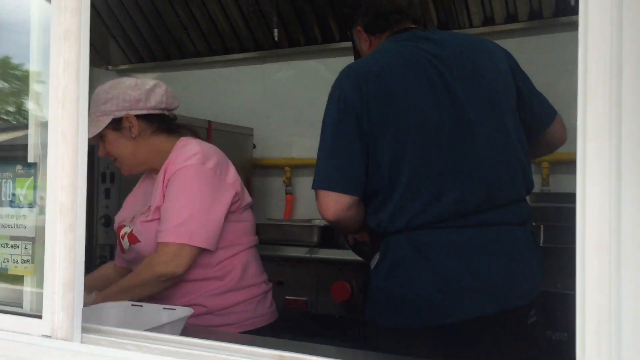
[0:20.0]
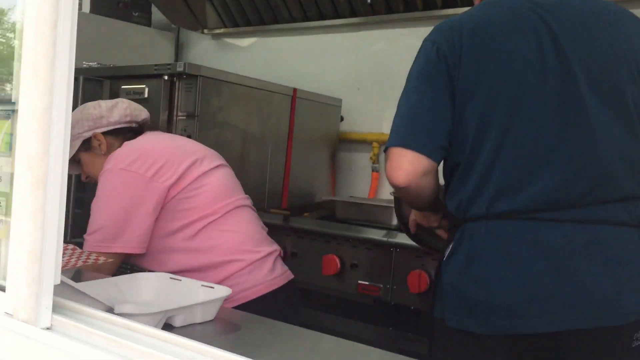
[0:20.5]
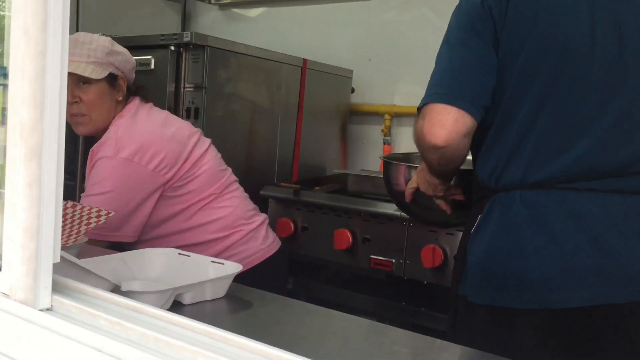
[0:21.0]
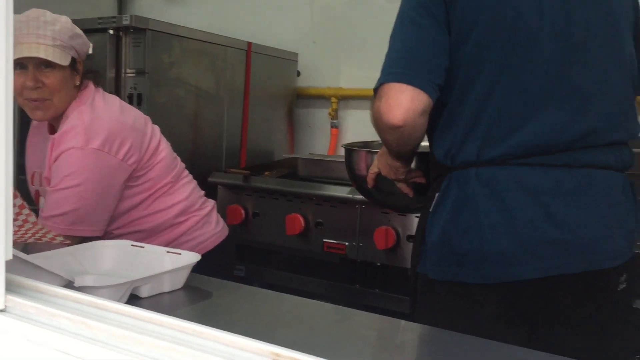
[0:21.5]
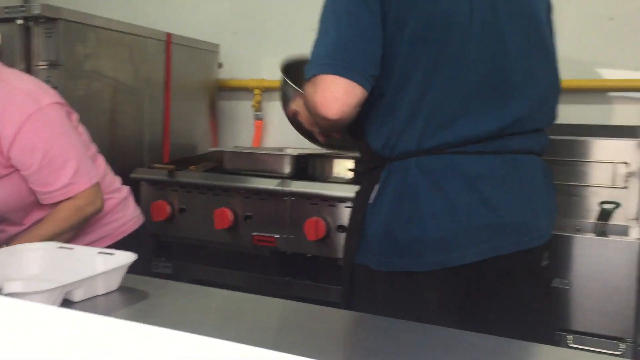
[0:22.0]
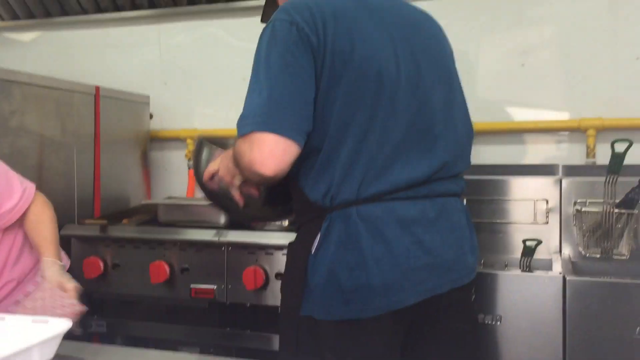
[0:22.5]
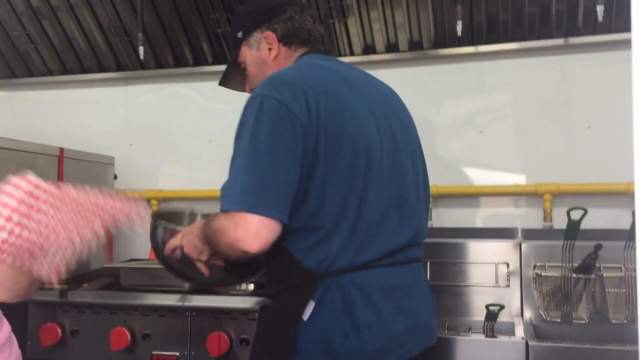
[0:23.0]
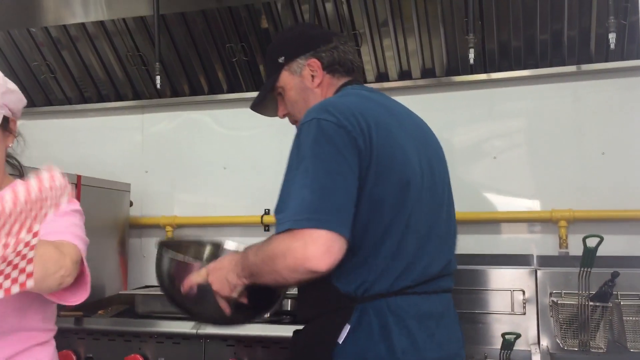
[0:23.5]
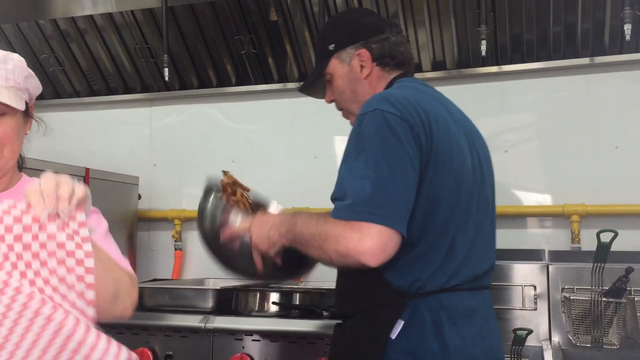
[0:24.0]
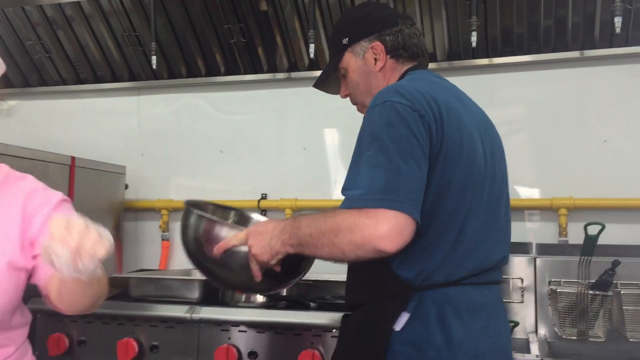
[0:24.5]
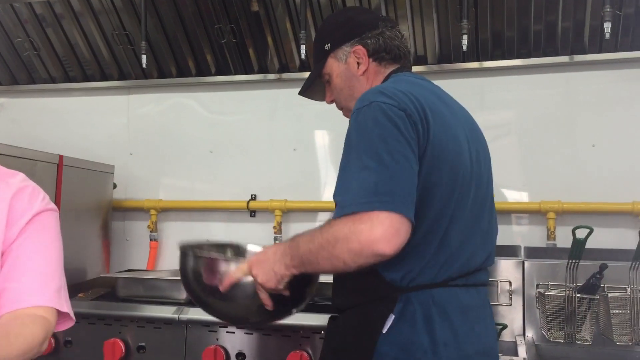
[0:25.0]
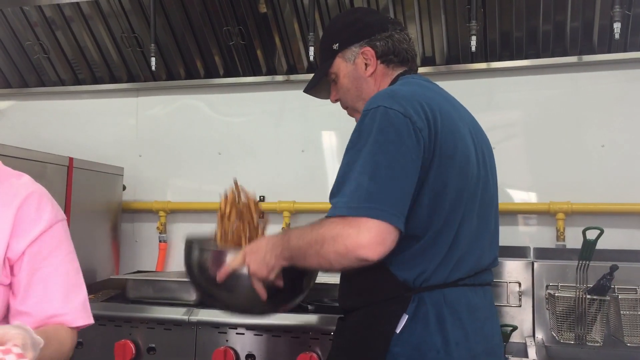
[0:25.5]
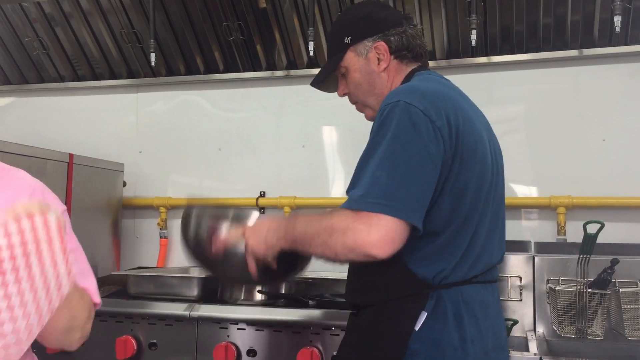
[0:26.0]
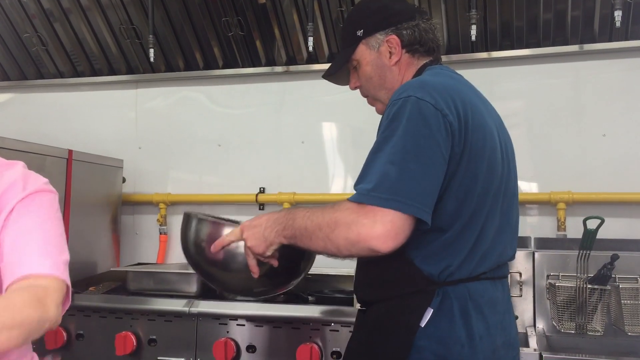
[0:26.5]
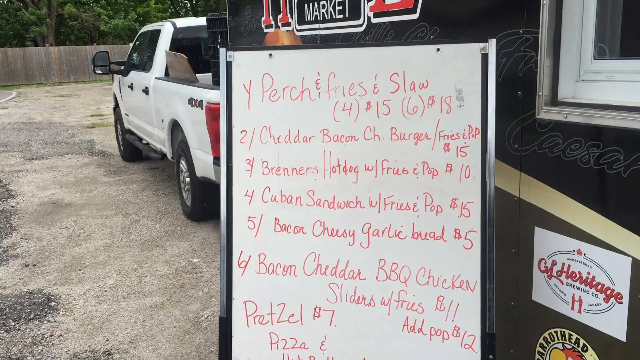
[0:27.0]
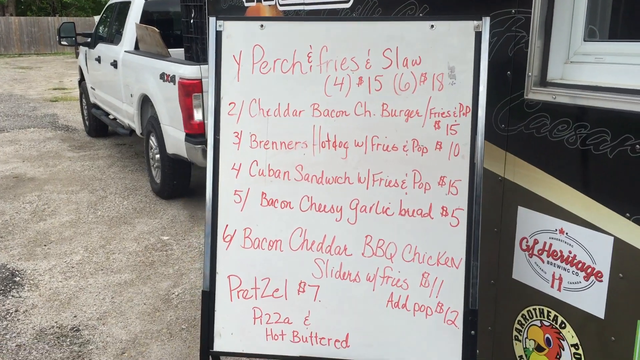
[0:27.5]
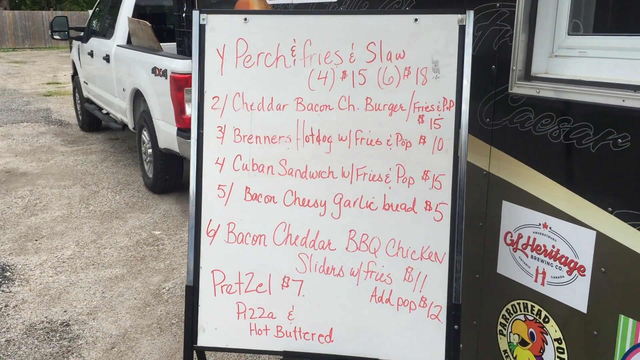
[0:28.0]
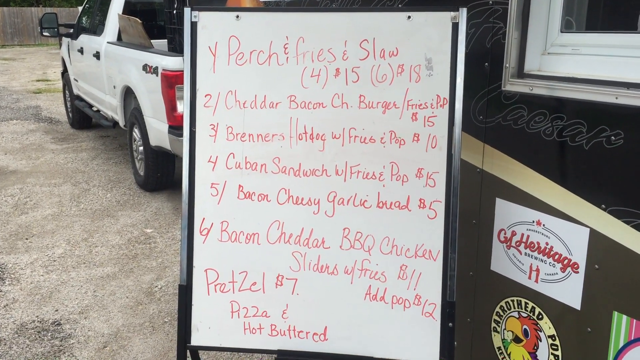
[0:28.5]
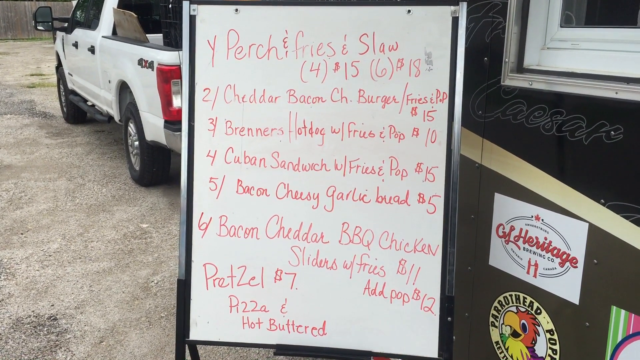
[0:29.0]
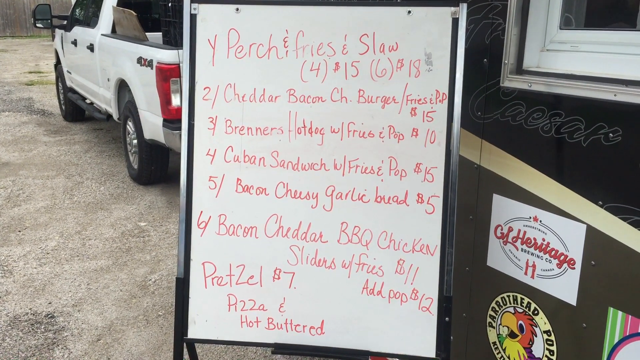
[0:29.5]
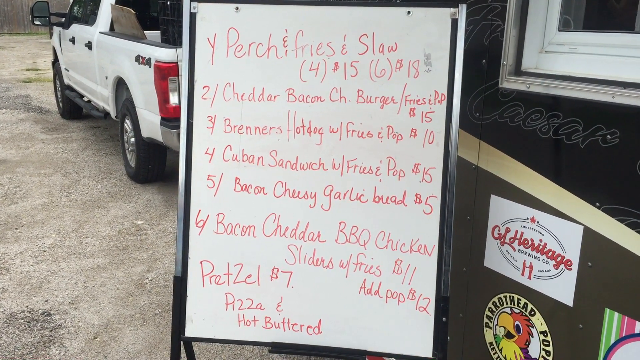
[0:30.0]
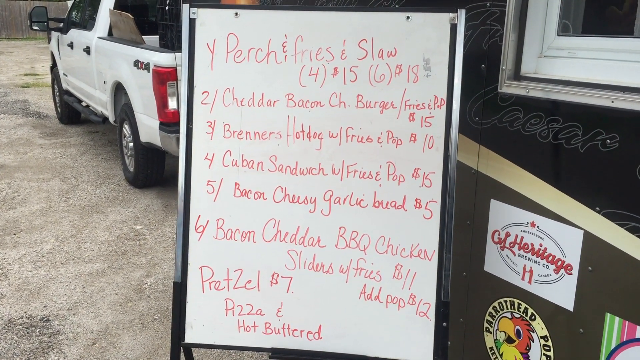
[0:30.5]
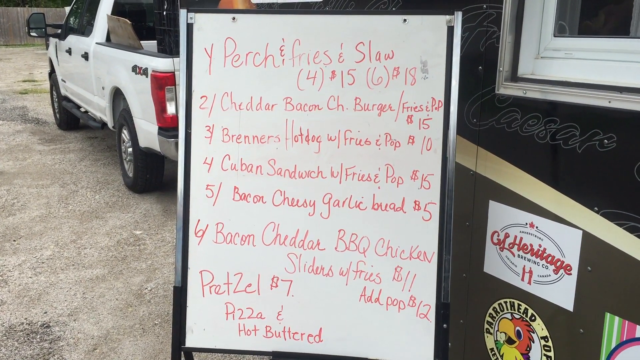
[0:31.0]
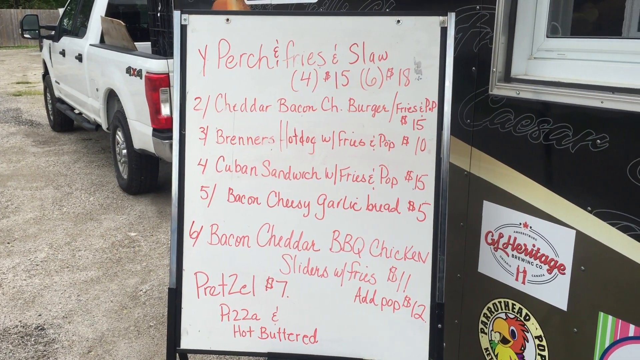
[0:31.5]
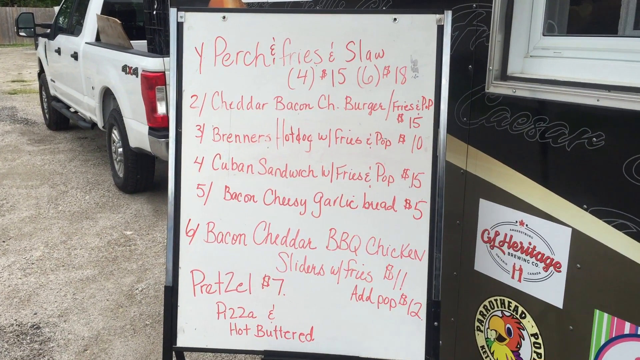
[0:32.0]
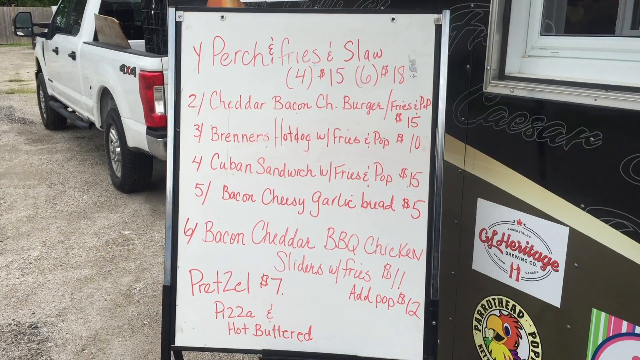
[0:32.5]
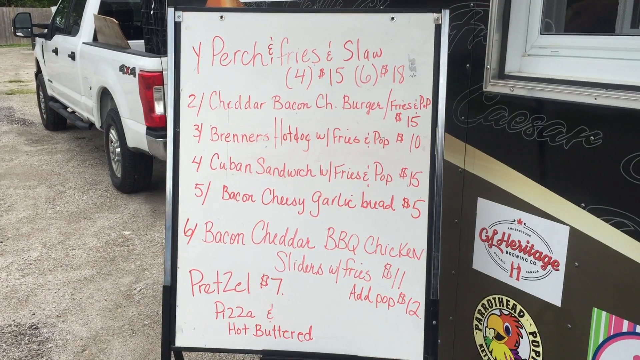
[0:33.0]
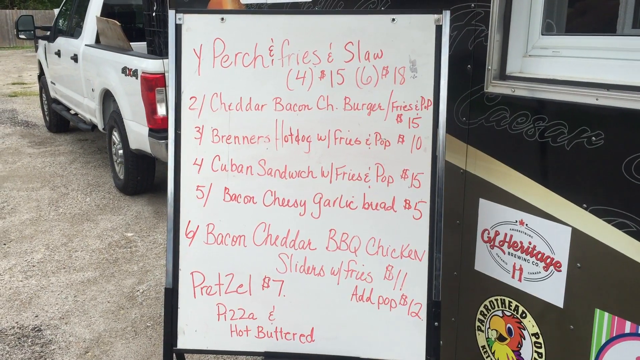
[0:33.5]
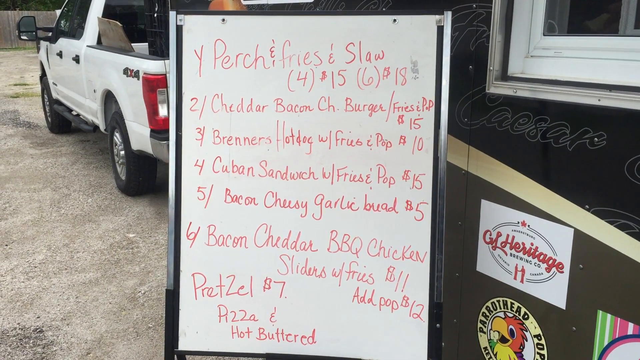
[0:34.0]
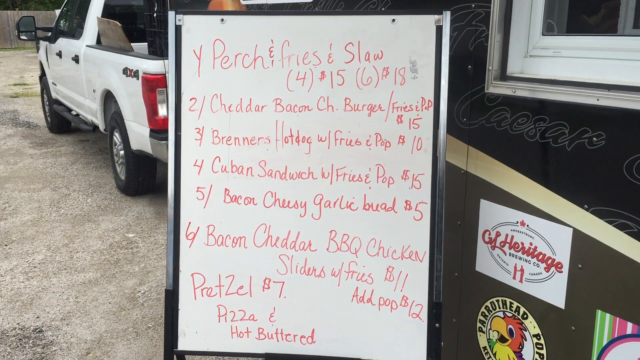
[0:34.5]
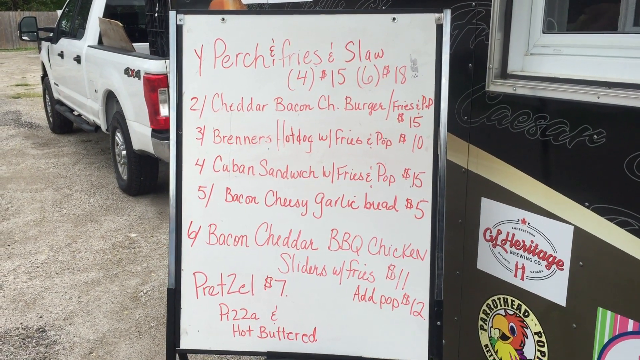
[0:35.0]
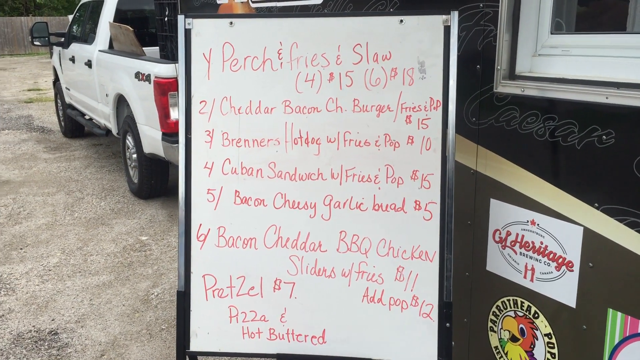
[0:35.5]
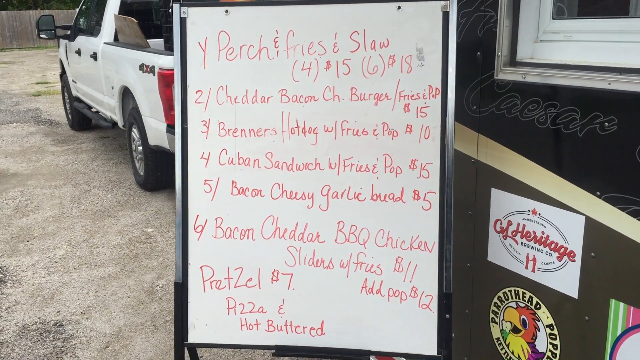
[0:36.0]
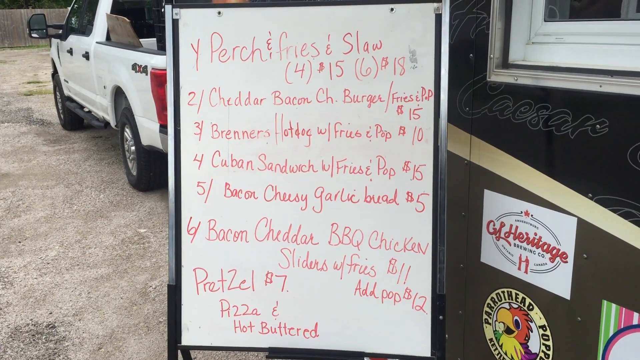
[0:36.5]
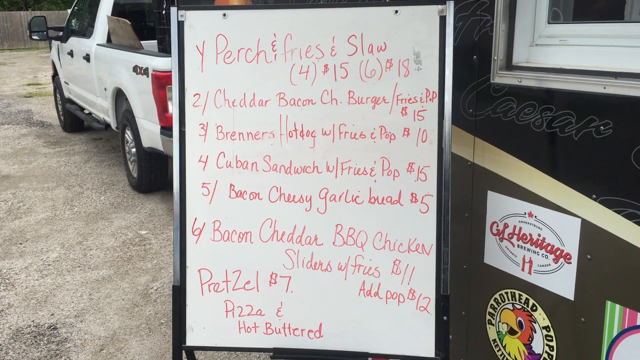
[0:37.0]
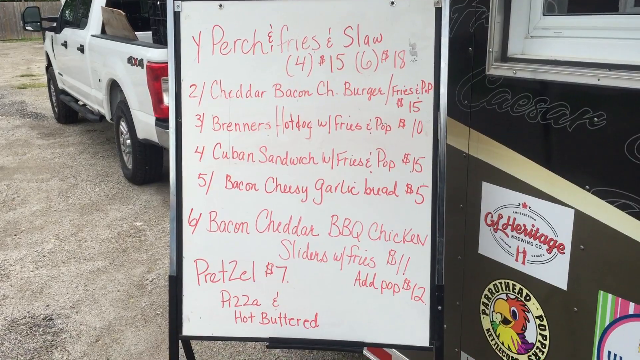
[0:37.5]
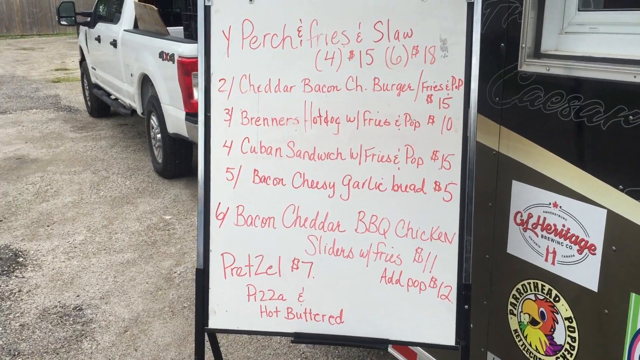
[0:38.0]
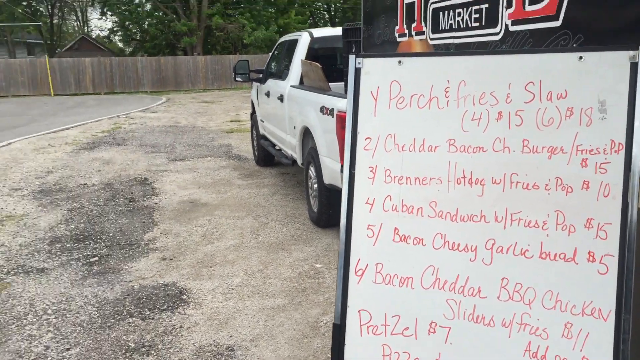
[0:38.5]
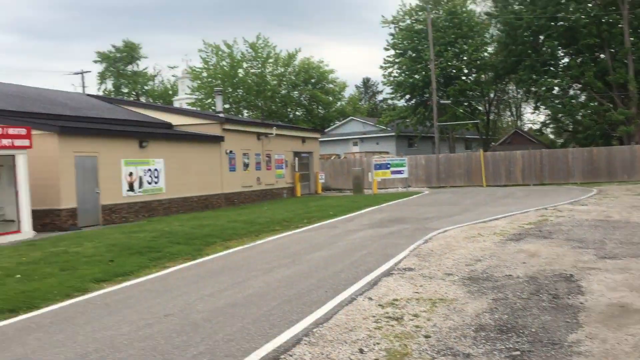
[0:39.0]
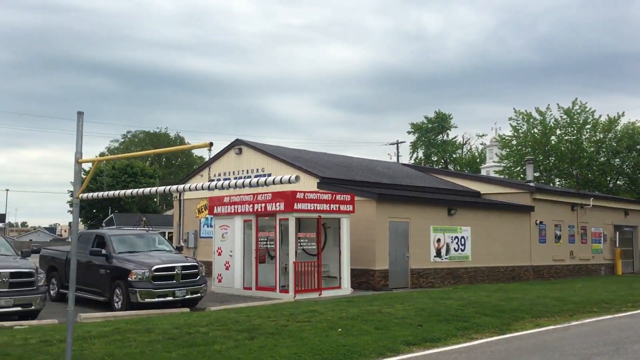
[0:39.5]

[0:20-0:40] A caravan or trailer parked on a street has "Joyful Lynne's Kitchen" written on it. Food is pictured on the outside: a bowl with something that looks like a salad with white sauce on top, buns, and sandwiches, all very colorful. The trailer has a very big window that is open, and two black and white wheels. Inside are a woman wearing a pink t-shirt and a cap, and a man wearing a navy blue t-shirt, an apron and a black cap, who seems to be mixing things in a silver bowl. Everyone is busy preparing food. The menu outside is then shown, written in red, with items such as cheddar bacon, burger, bacon cheddar barbecue chicken, pretzels for $7, sliders, and some pizza. The trailer is attached to a white 4x4 car, and the camera is a bit shaky. The view then moves to the left, showing a house with cars parked outside it.